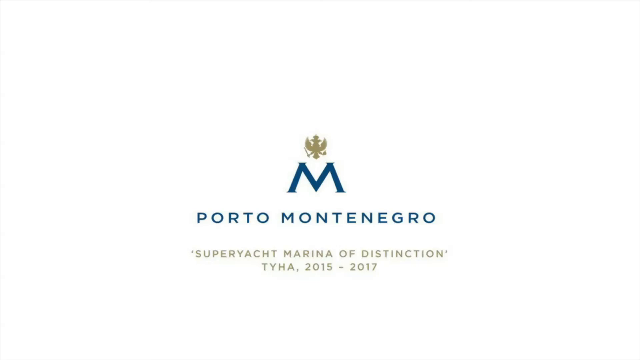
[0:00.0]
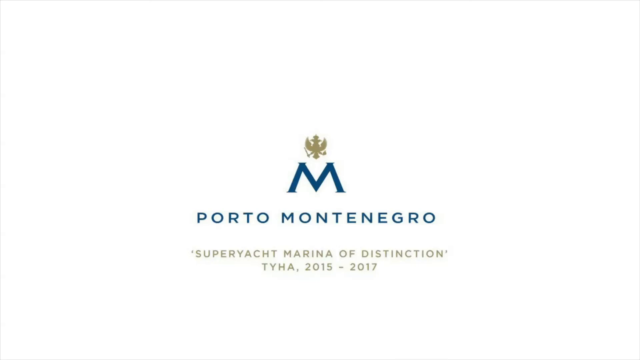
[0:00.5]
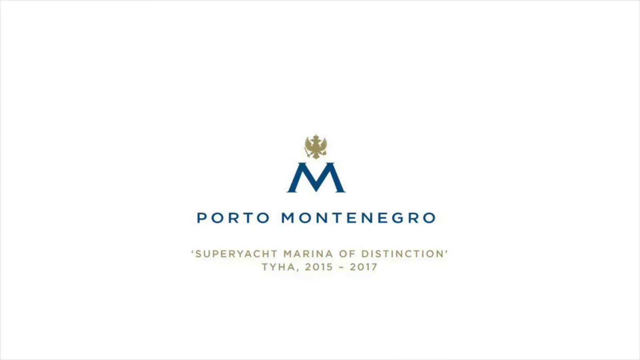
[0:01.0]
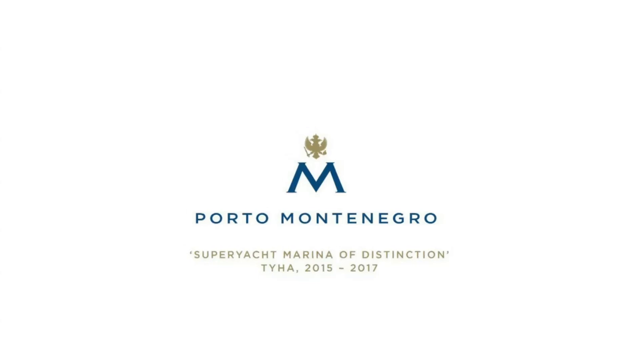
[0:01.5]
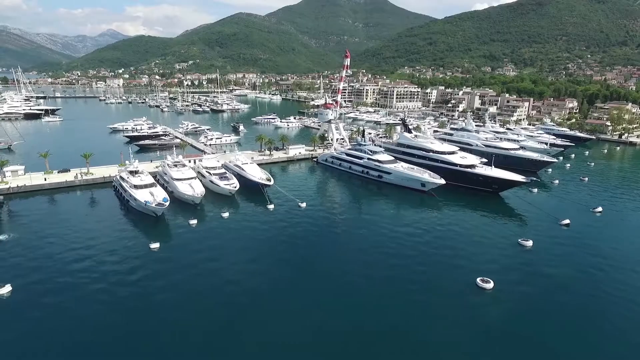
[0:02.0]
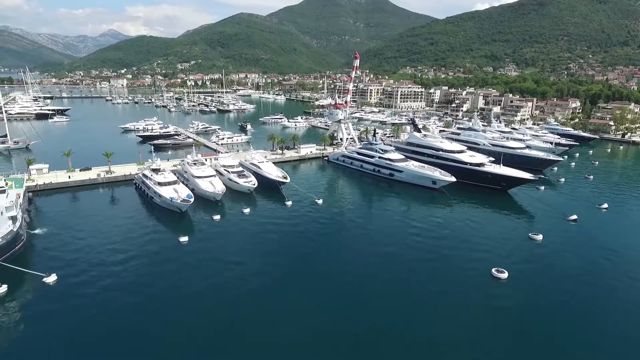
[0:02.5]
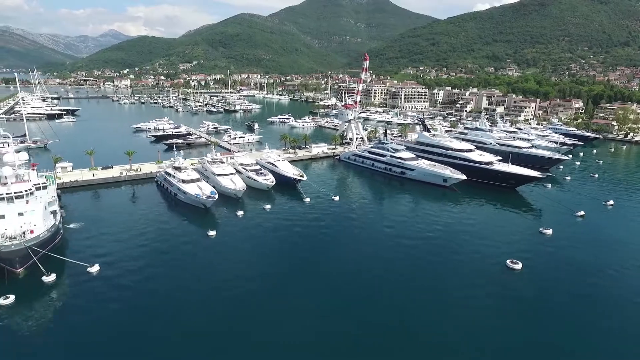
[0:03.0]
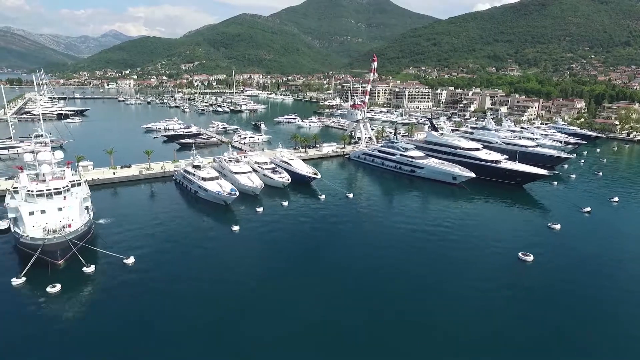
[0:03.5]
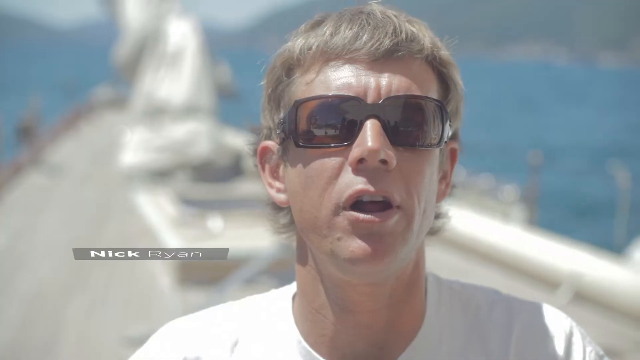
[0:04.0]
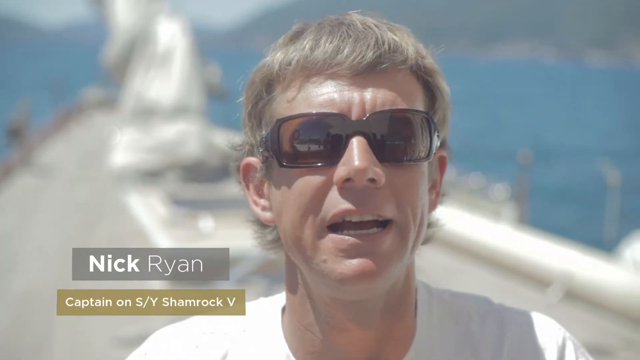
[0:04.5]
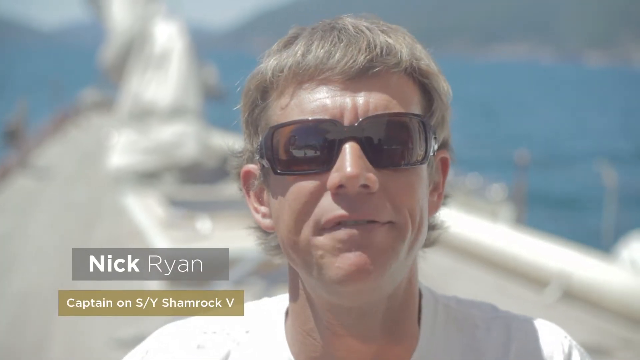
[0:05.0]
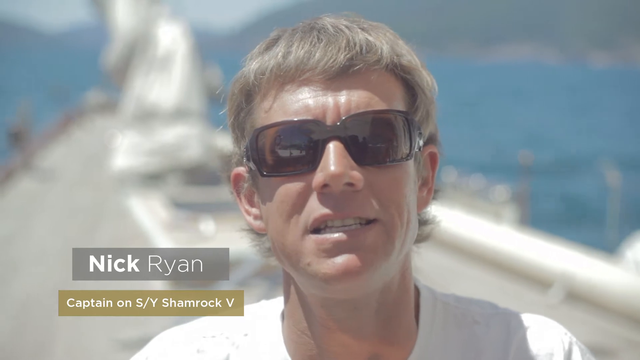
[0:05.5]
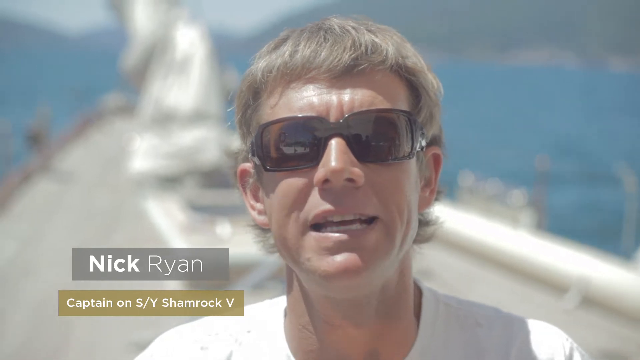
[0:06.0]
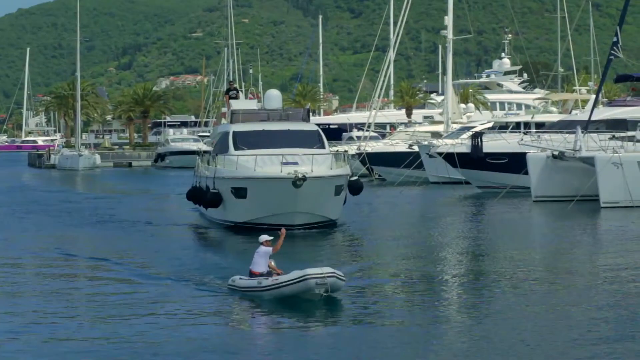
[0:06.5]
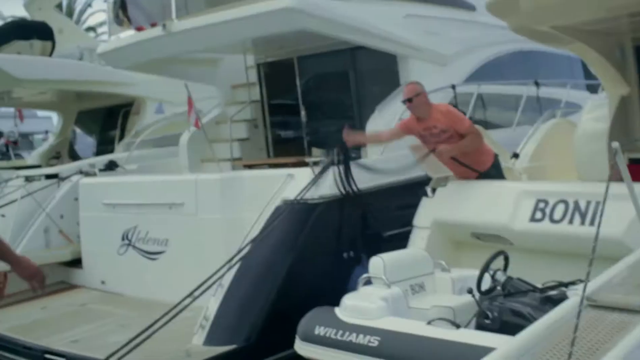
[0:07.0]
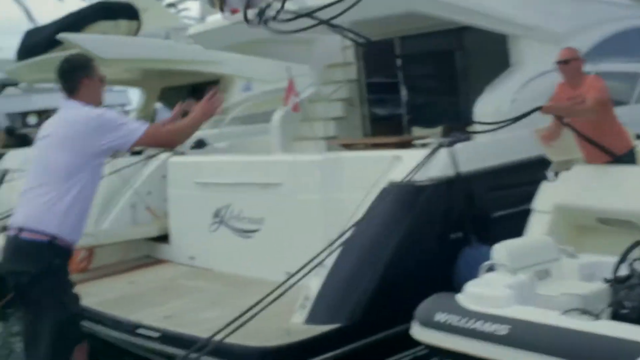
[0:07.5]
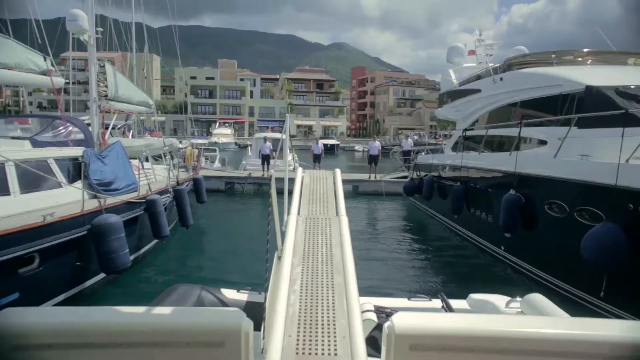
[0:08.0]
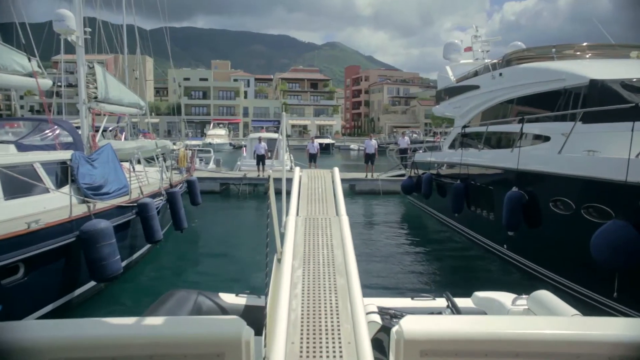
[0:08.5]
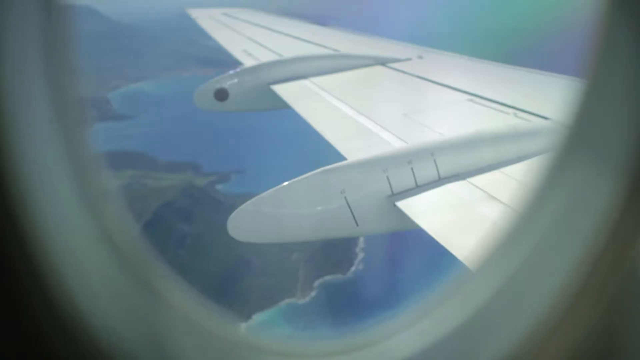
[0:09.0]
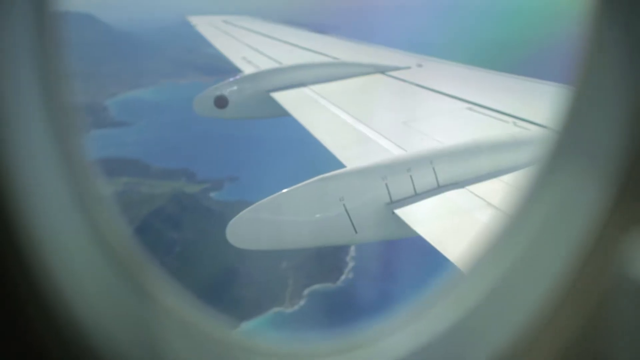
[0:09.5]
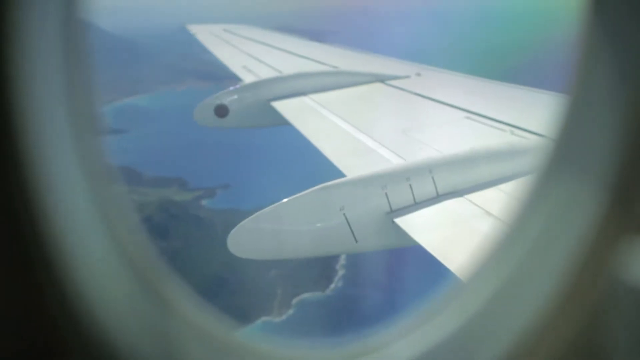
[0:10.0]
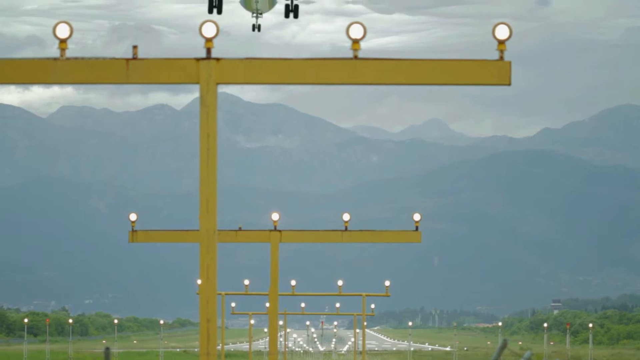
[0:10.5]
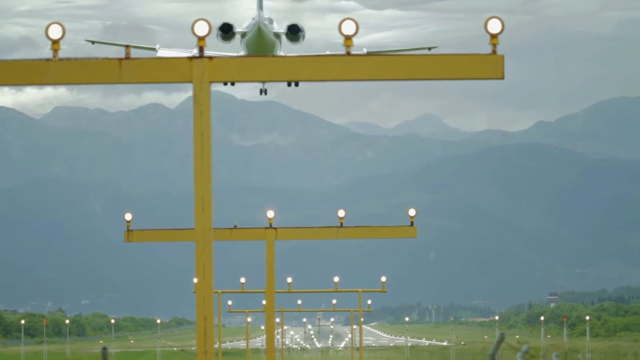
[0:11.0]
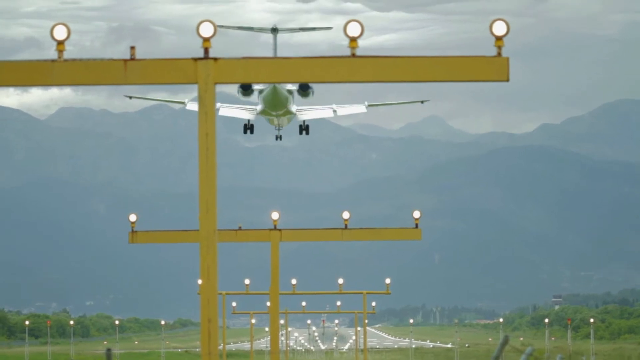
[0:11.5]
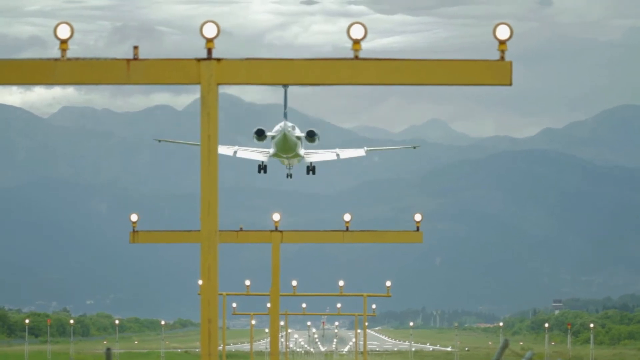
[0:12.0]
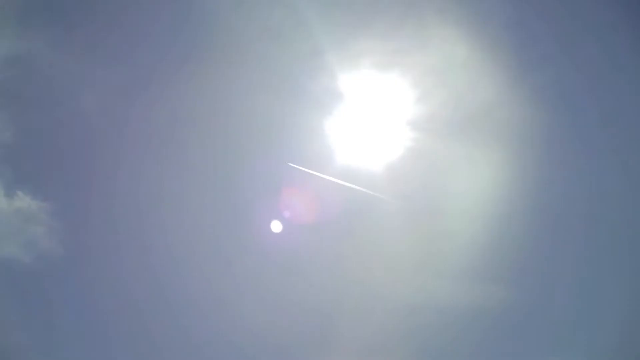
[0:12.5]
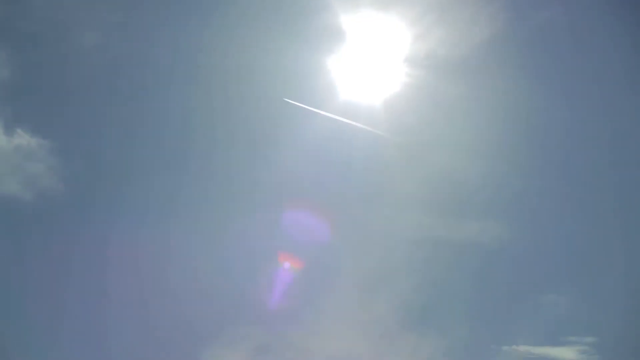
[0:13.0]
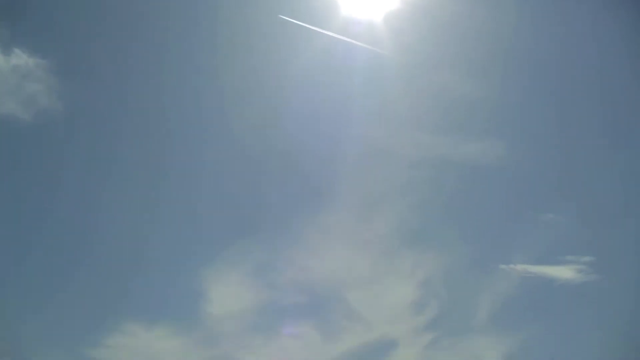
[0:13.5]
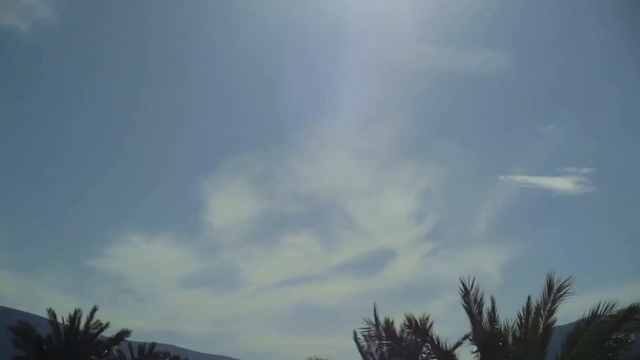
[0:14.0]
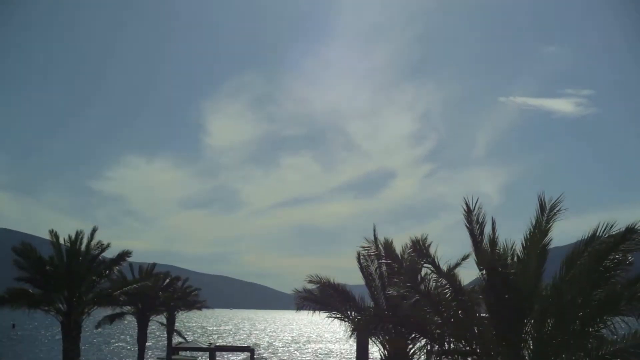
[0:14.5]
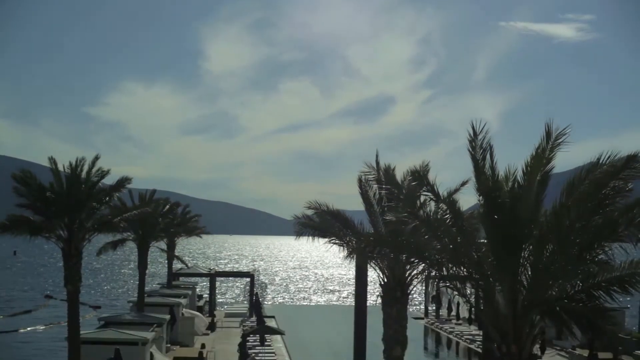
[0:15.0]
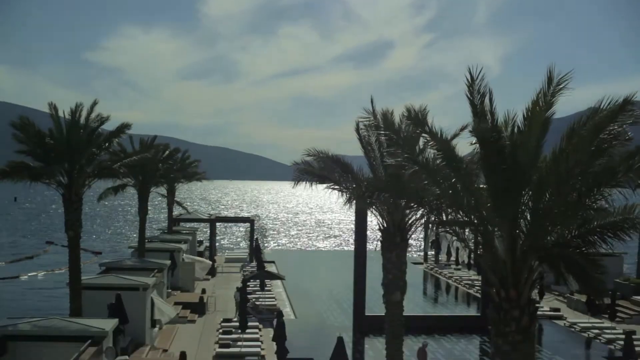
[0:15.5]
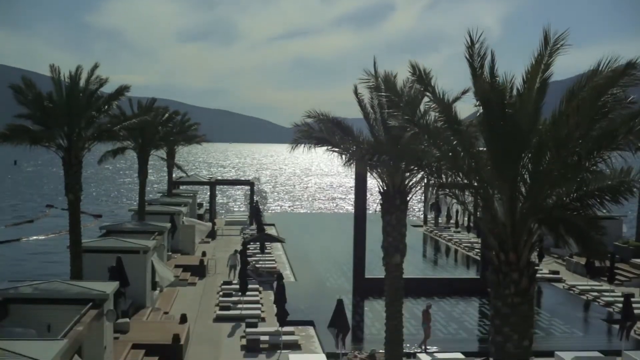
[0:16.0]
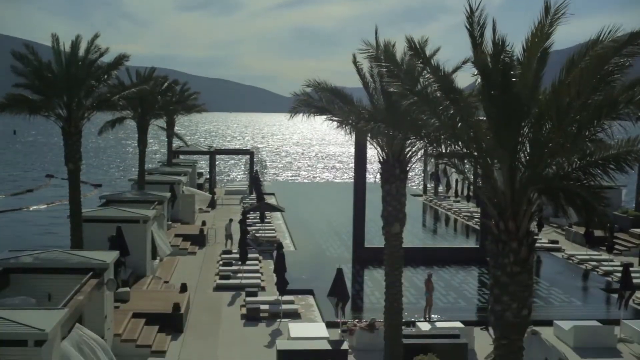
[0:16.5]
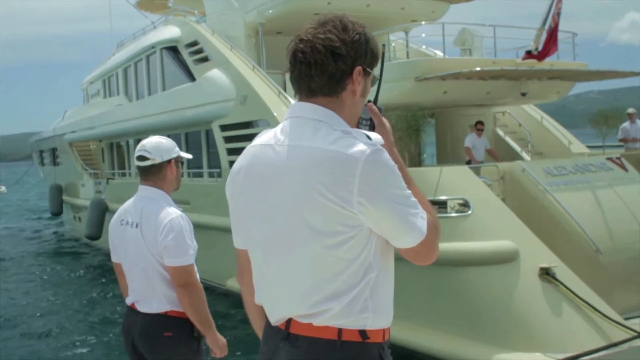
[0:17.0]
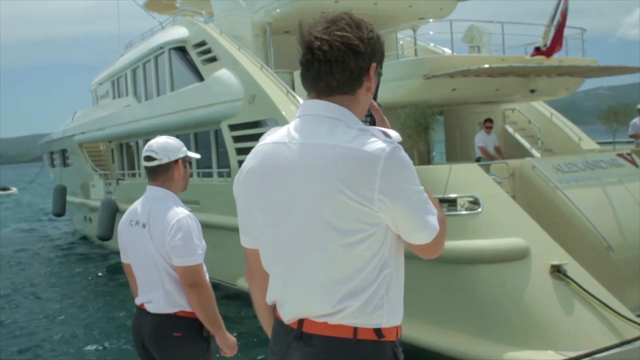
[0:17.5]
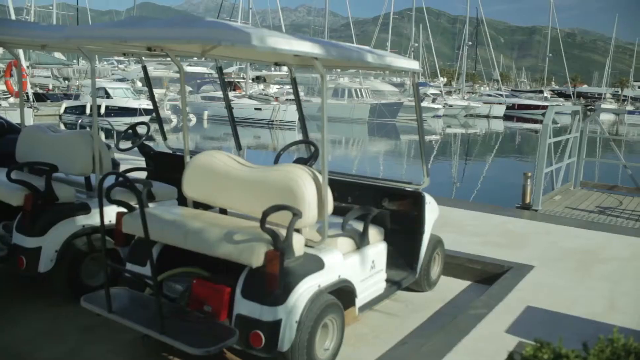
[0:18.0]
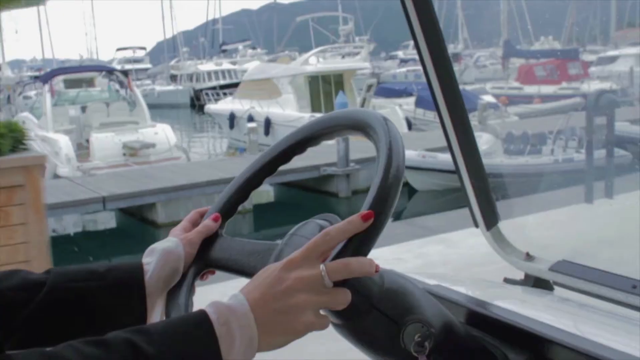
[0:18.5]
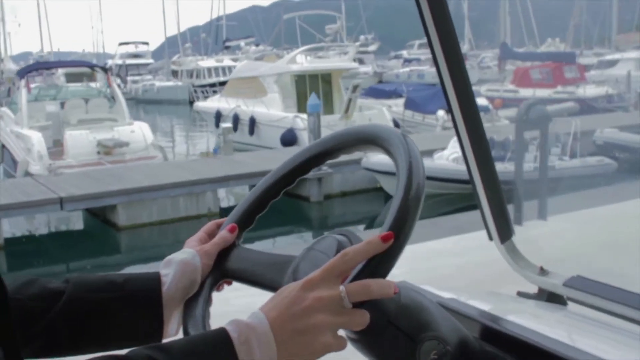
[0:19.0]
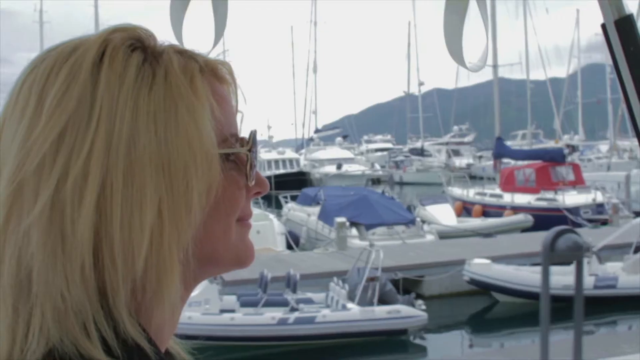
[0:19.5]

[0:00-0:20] The video opens with the name Porto Montenegro, Super Yacht Marina of Distinction, 2015 to 2017. A boat is shown, along with many yachts and ships. An airport appears, and a plane is landing on it. On an ocean or river there are many personal ships, and people are there; it seems to be a tourist spot, with many personal yachts or relaxation ships that people apparently rent.